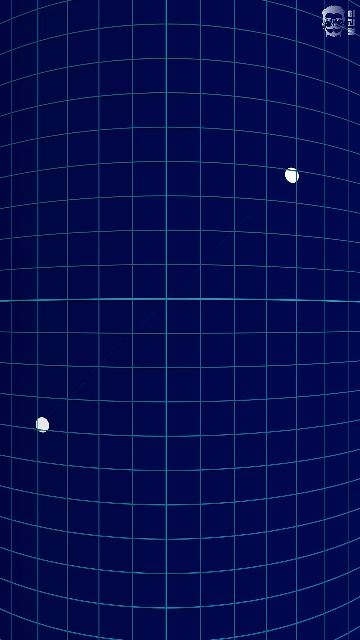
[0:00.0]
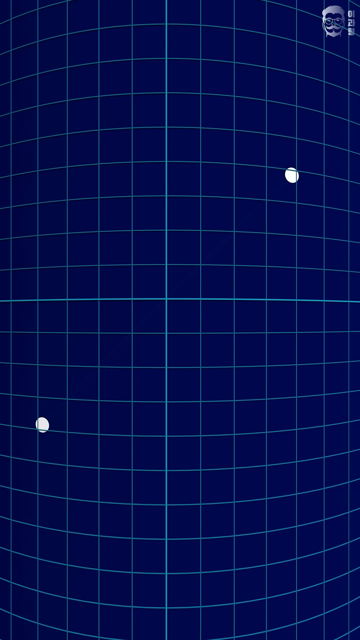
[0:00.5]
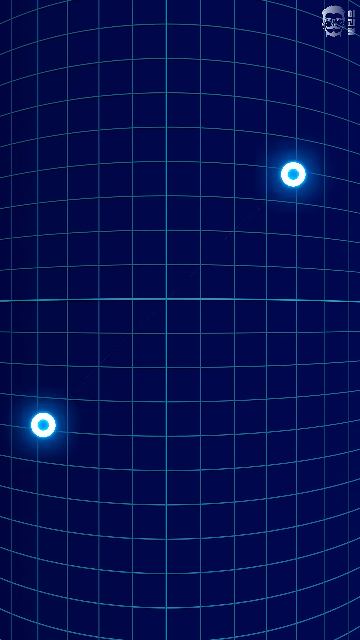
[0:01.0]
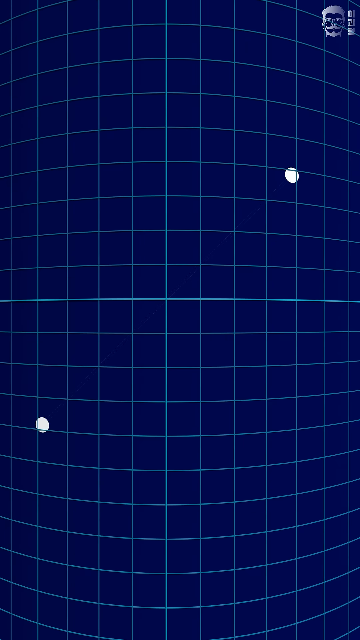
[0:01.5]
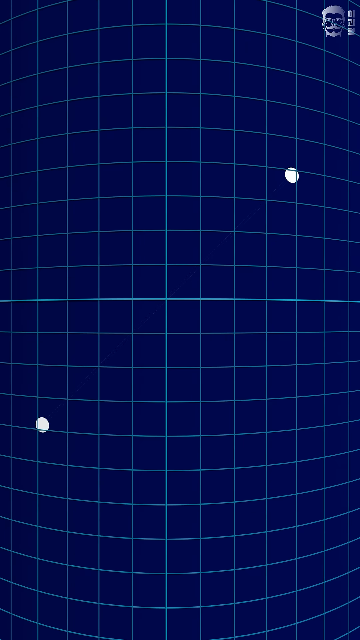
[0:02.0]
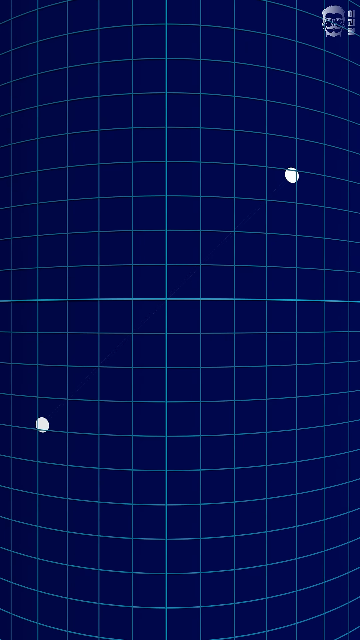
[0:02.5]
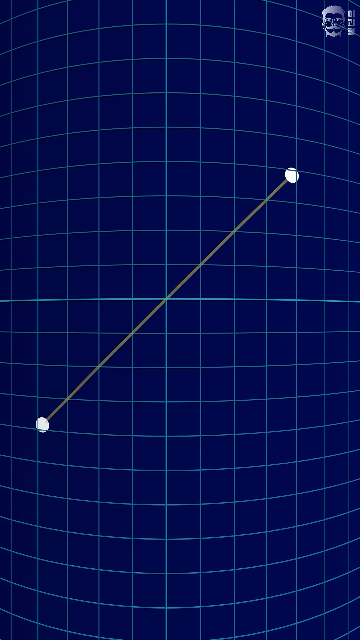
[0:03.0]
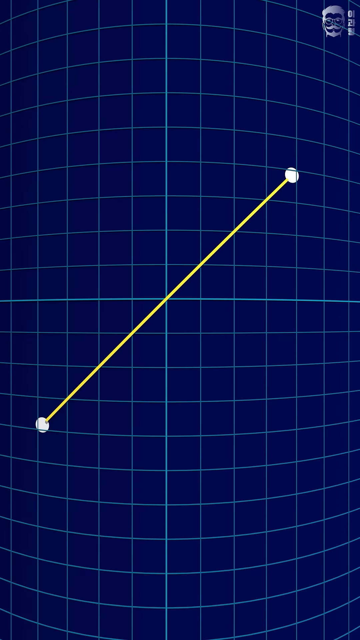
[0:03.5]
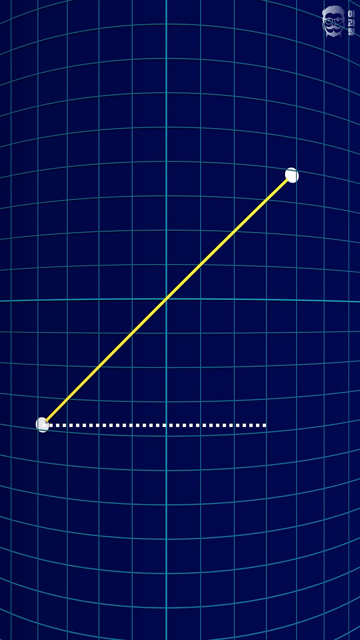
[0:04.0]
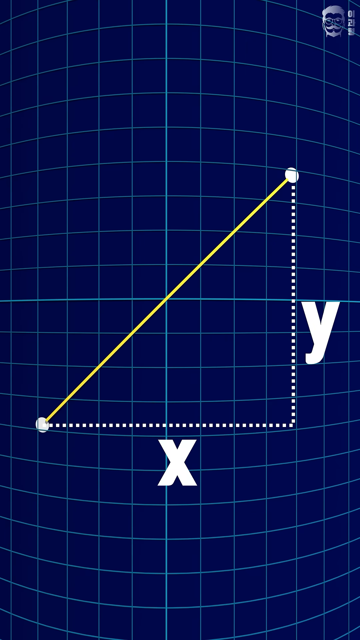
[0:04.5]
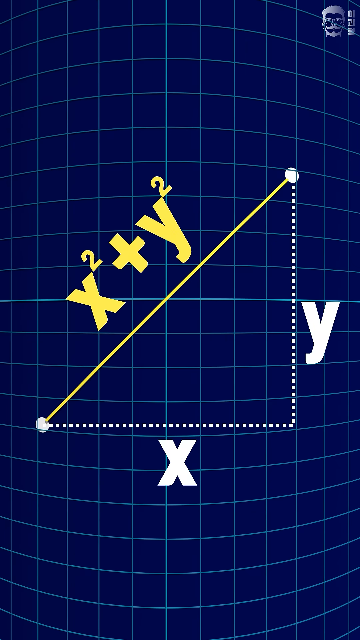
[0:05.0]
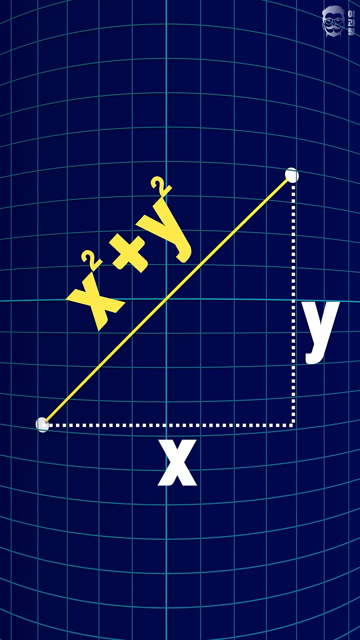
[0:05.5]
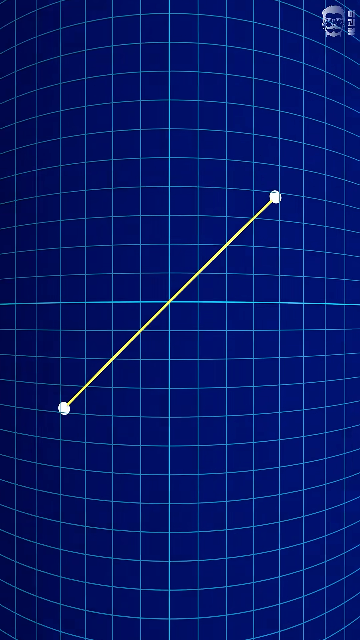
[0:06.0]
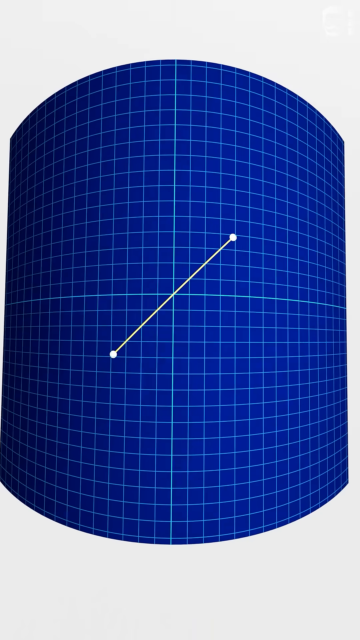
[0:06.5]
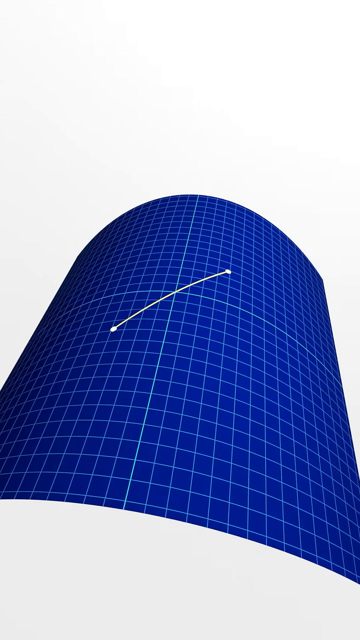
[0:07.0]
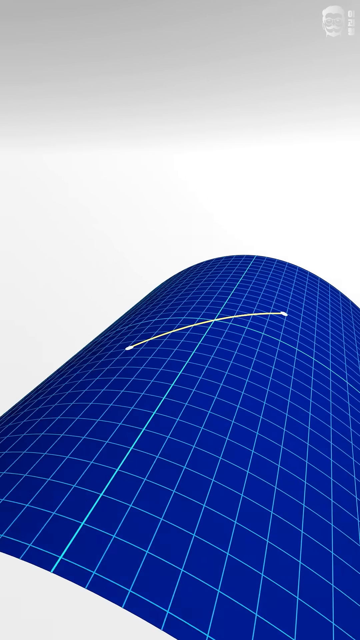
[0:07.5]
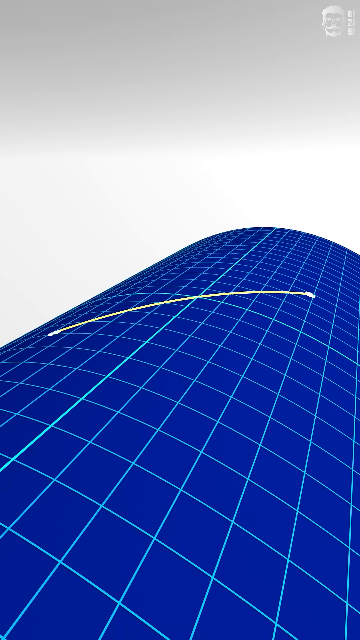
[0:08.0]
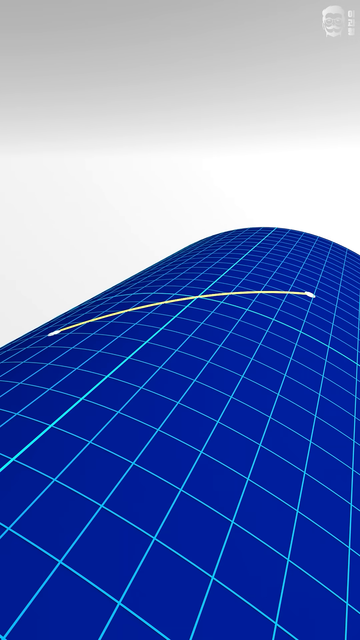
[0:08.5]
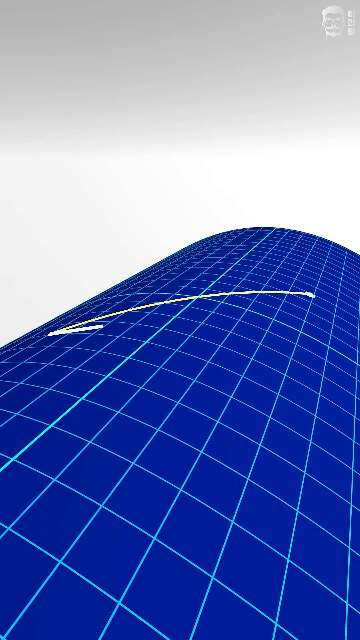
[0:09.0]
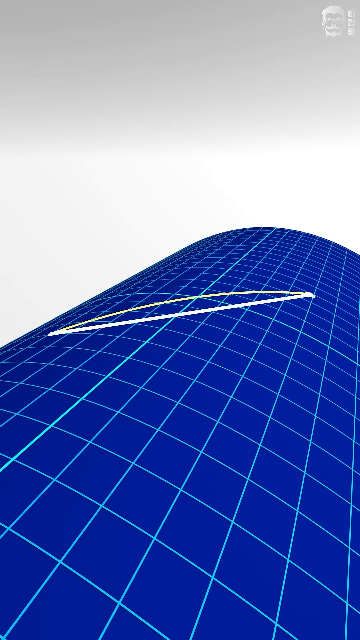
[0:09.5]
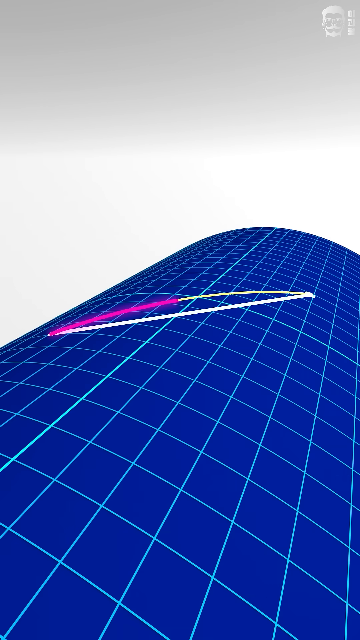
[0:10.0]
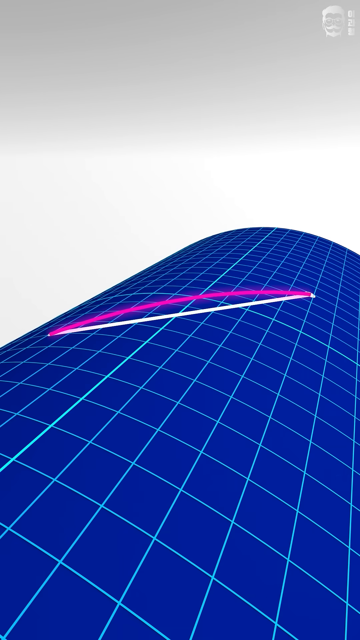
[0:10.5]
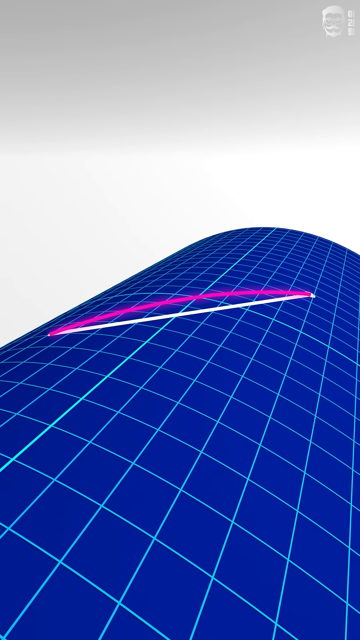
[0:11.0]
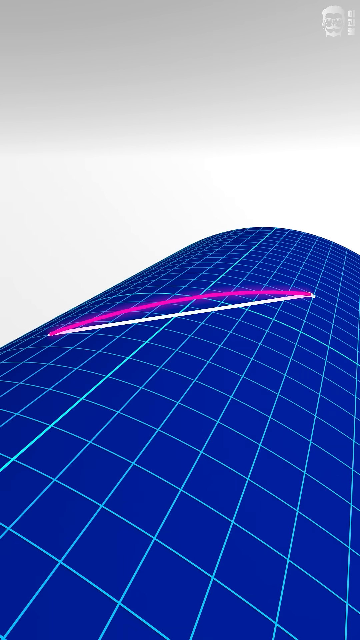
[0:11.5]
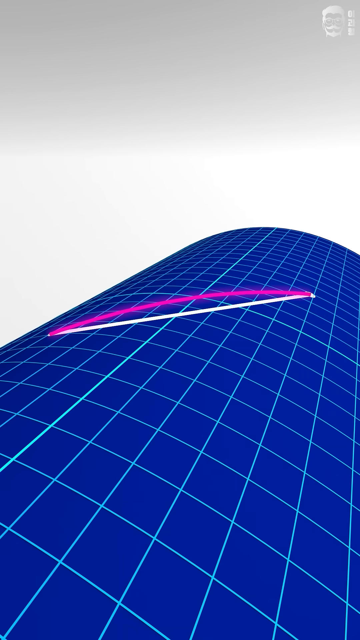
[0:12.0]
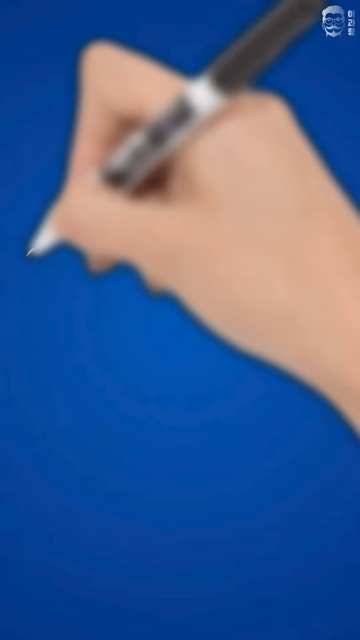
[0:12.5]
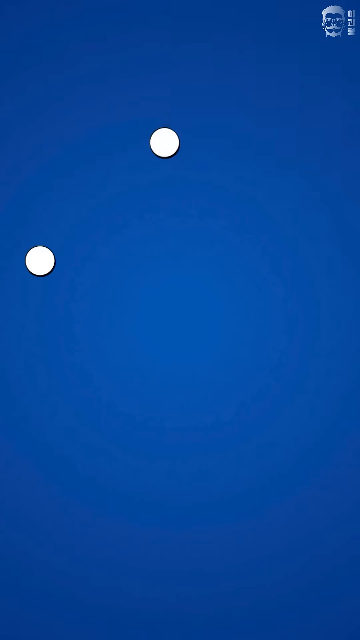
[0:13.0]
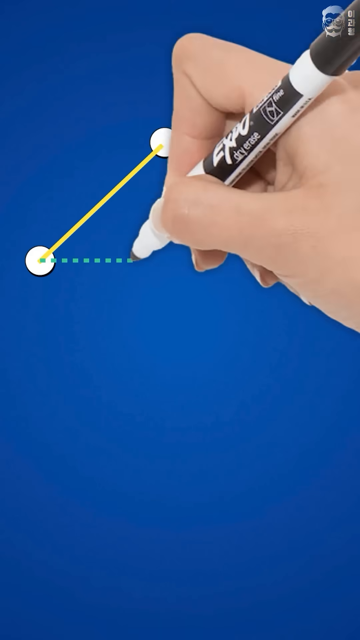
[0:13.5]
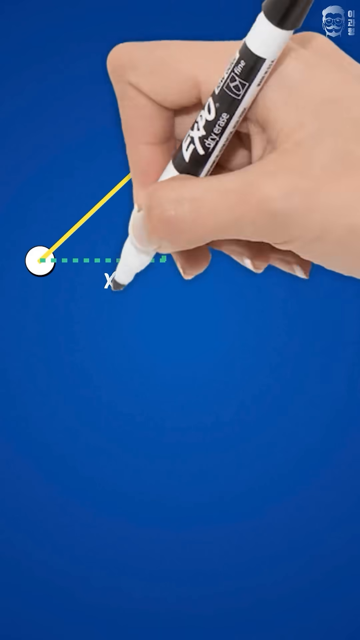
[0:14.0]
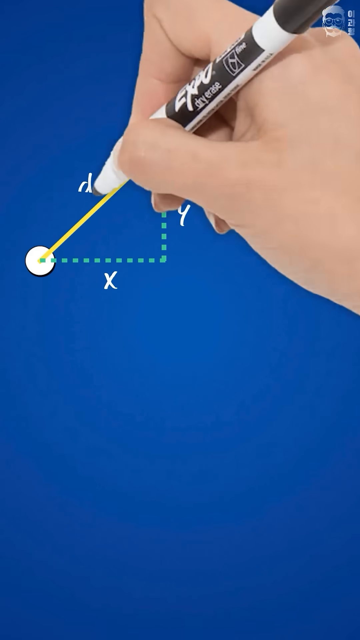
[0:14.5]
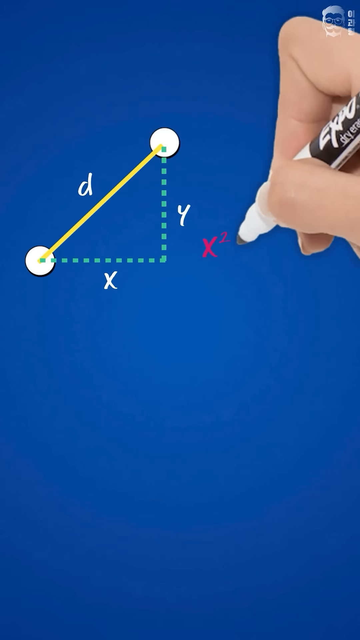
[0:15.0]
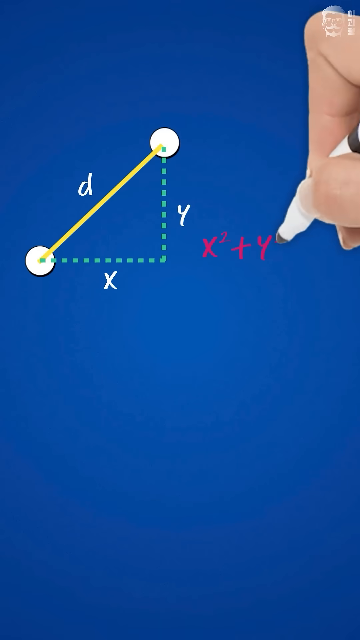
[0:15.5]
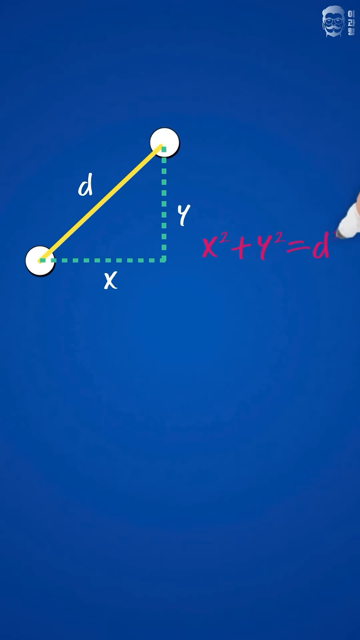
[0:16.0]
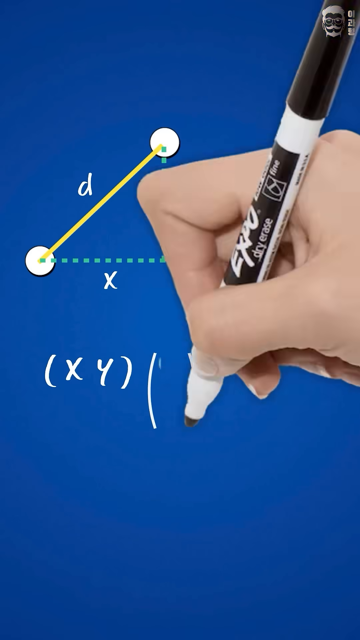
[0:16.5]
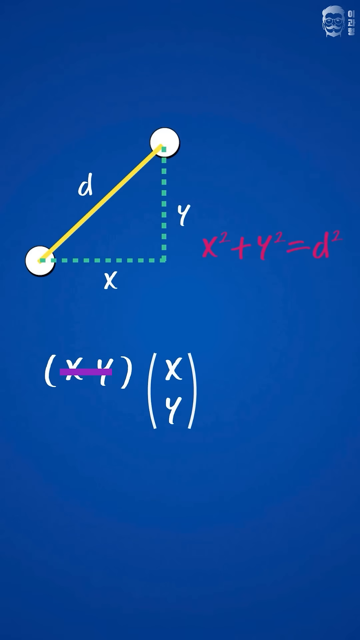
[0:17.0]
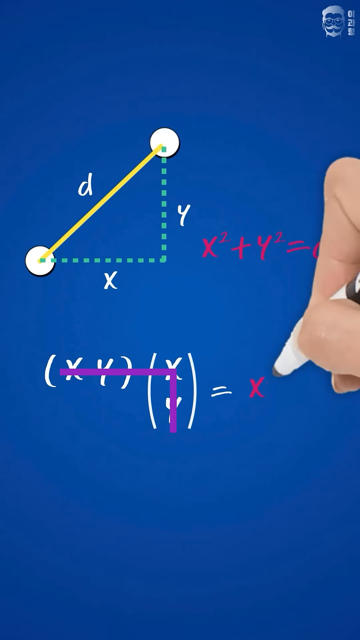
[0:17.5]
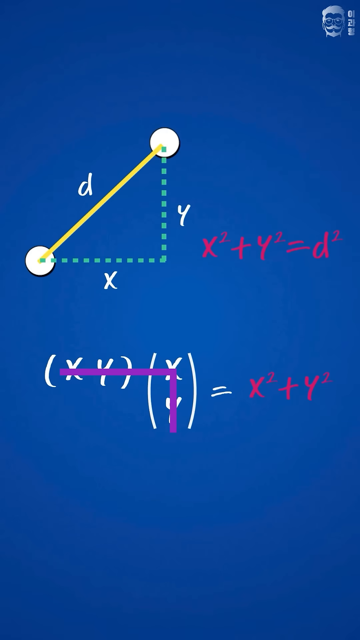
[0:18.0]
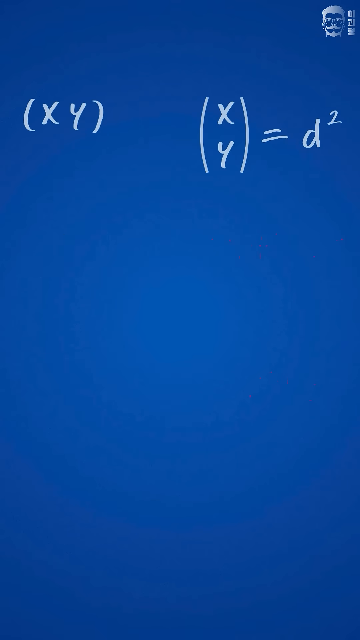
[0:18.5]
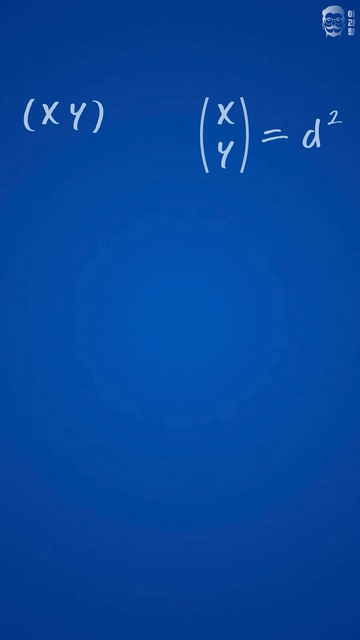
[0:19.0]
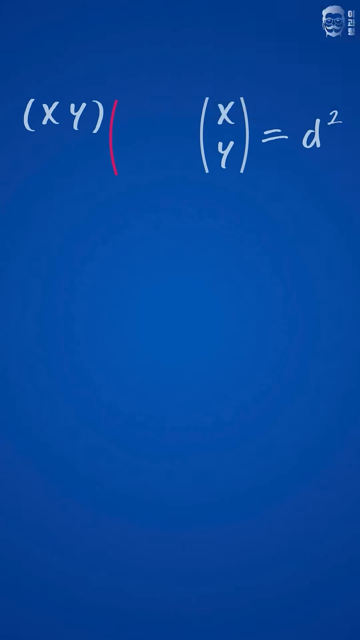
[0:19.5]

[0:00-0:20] In the background is a deep blue, 3D-style grid, curved slightly to give a subtle feeling of space or depth. In the foreground, three lines form a right triangle: a horizontal white dotted line along the bottom labeled X, a vertical white dotted line going upward labeled Y, and a solid yellow diagonal line, the hypotenuse, connecting the two endpoints. The hypotenuse has no label at first. White circles mark each point where the lines connect. The shot then changes to the same right angle, now updated: the yellow diagonal line is labeled D, possibly for distance. A hand writes algebraic expressions with an Expo brand marker, and "X, Y" is written under the triangle, suggesting the coordinates of a point. Green dotted lines reinforce the edges of the triangle.